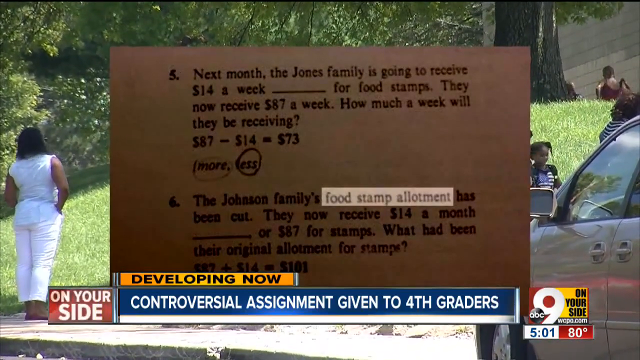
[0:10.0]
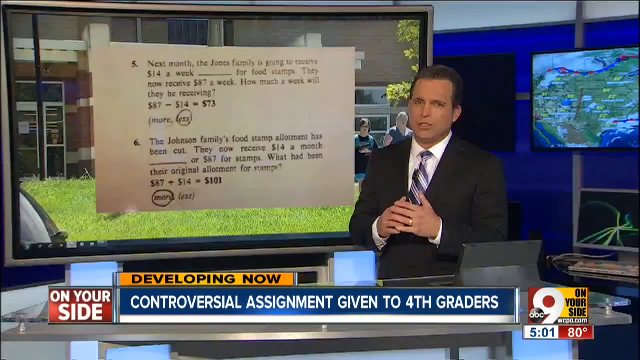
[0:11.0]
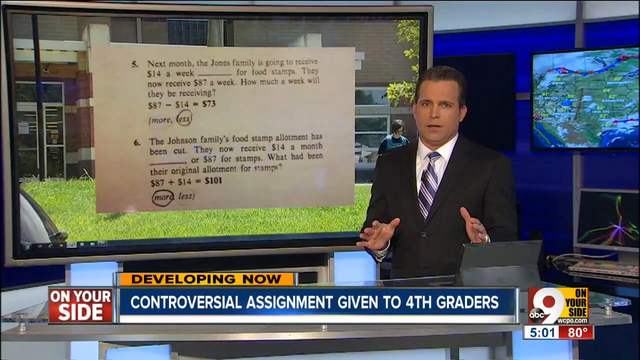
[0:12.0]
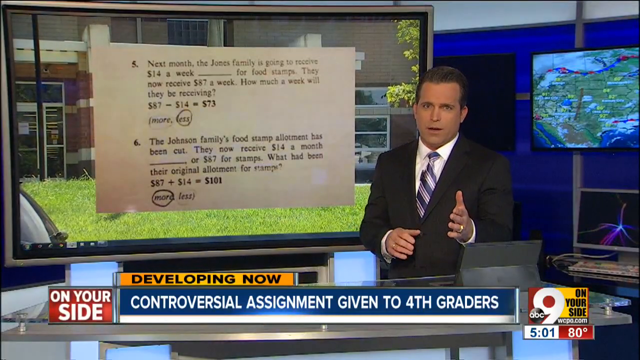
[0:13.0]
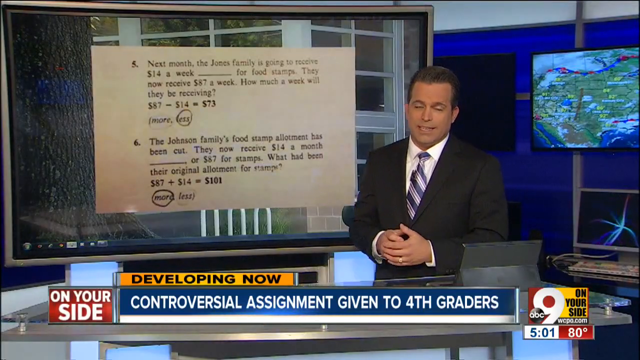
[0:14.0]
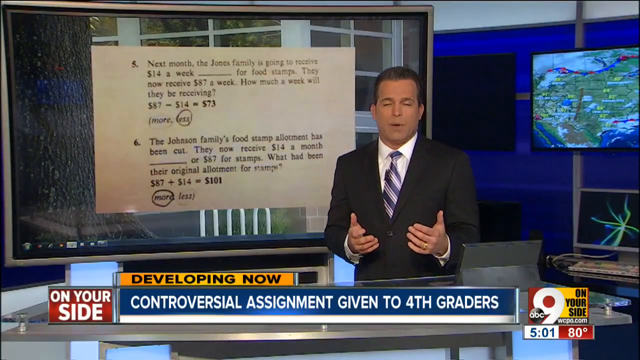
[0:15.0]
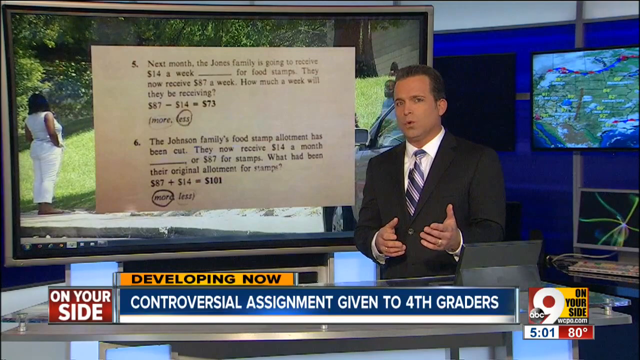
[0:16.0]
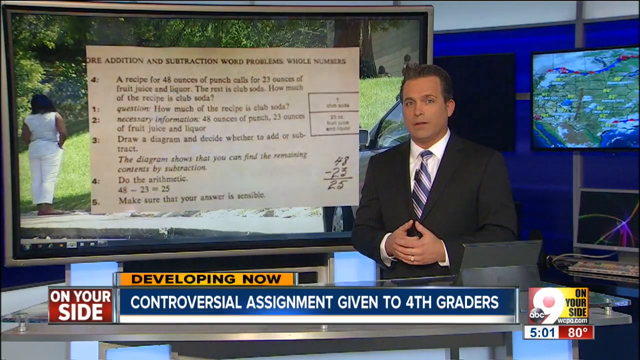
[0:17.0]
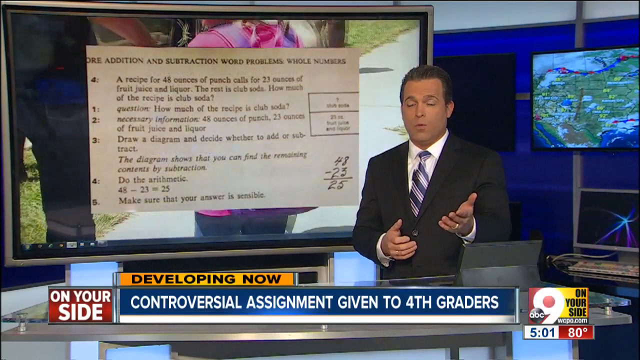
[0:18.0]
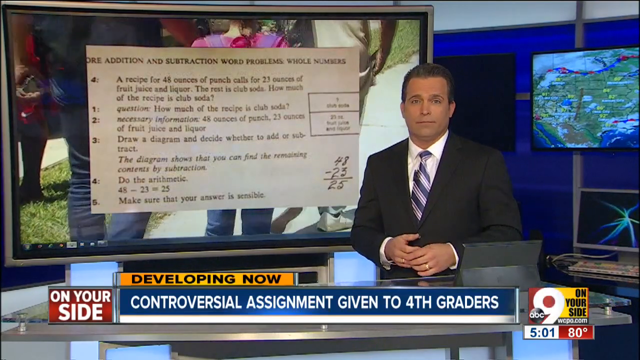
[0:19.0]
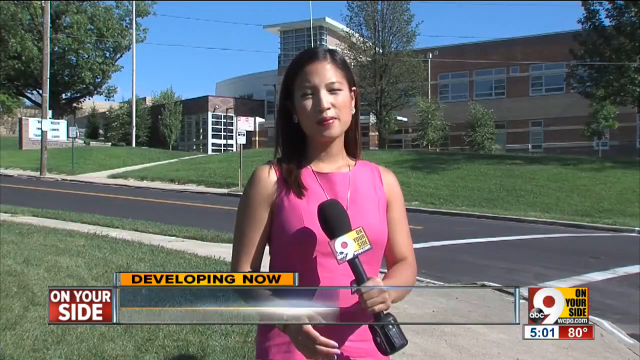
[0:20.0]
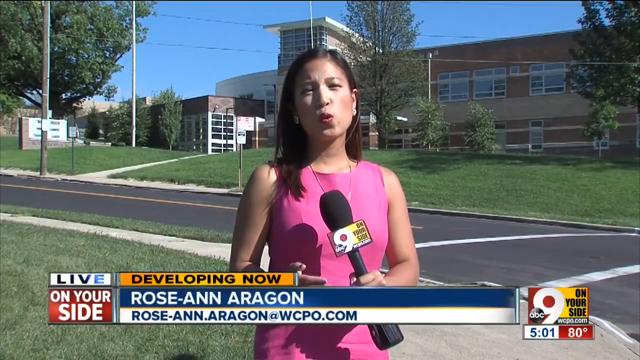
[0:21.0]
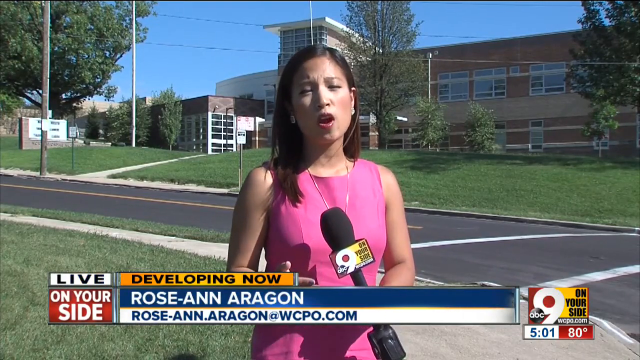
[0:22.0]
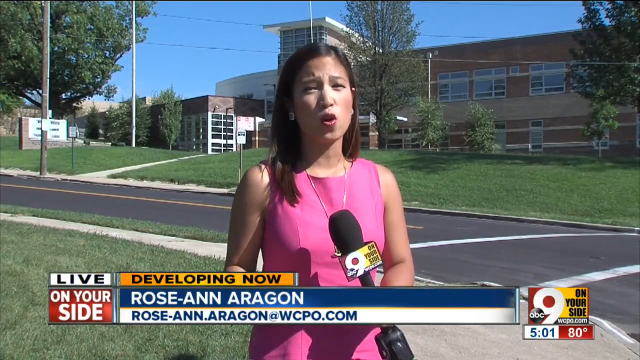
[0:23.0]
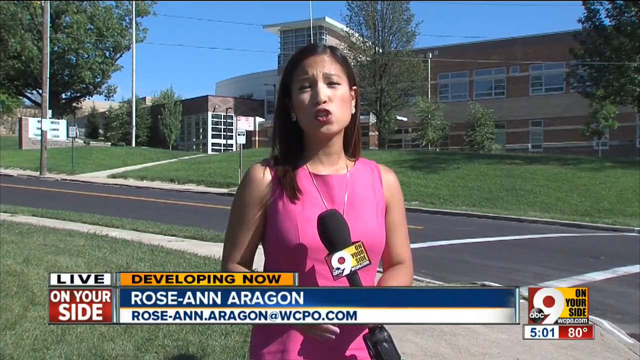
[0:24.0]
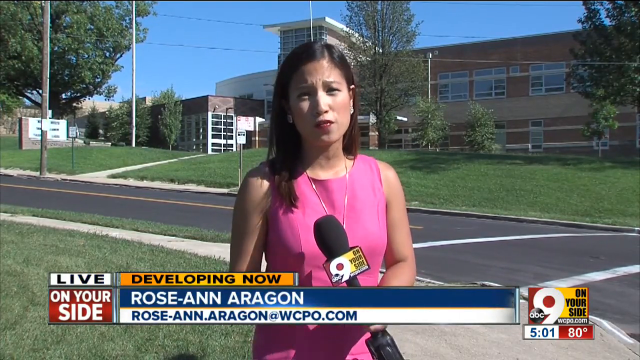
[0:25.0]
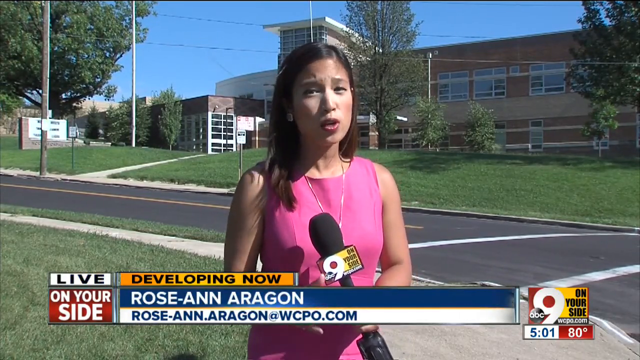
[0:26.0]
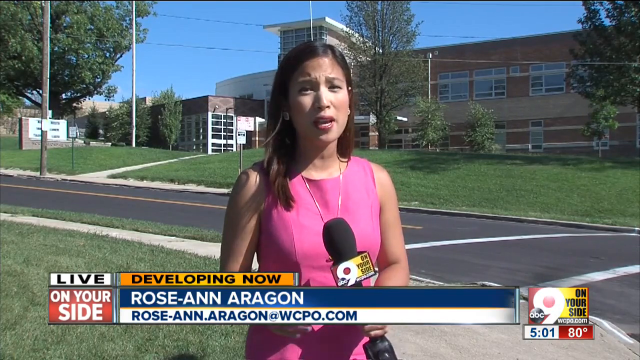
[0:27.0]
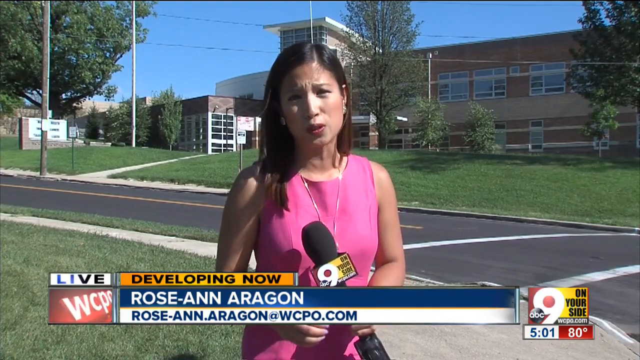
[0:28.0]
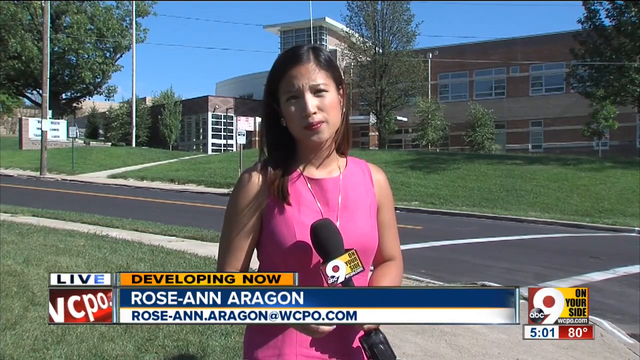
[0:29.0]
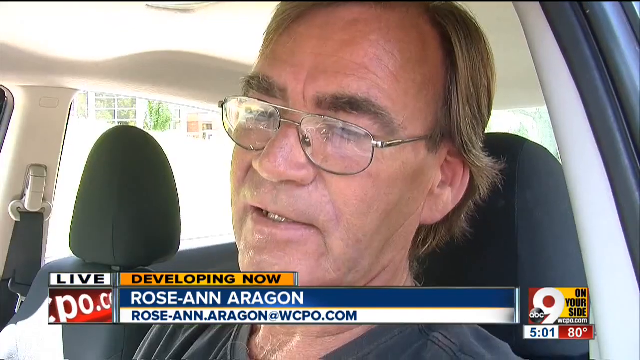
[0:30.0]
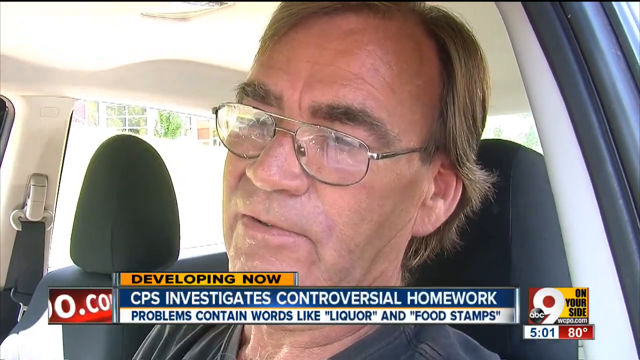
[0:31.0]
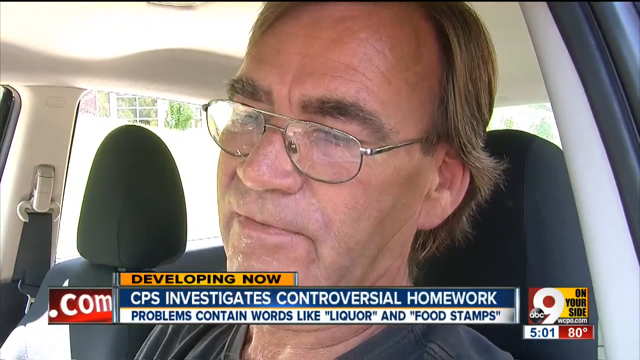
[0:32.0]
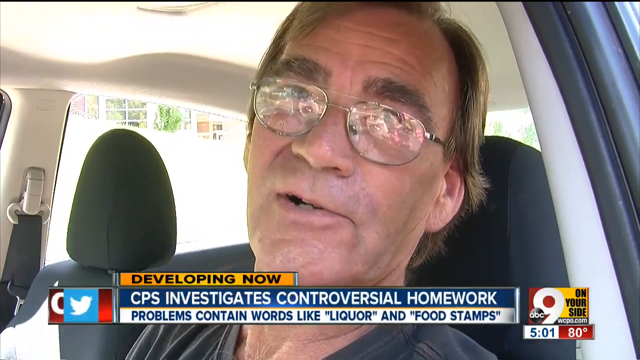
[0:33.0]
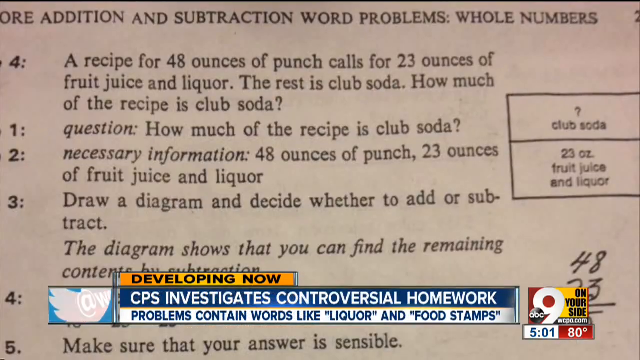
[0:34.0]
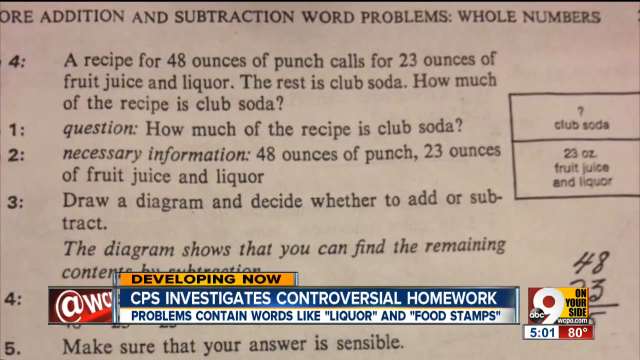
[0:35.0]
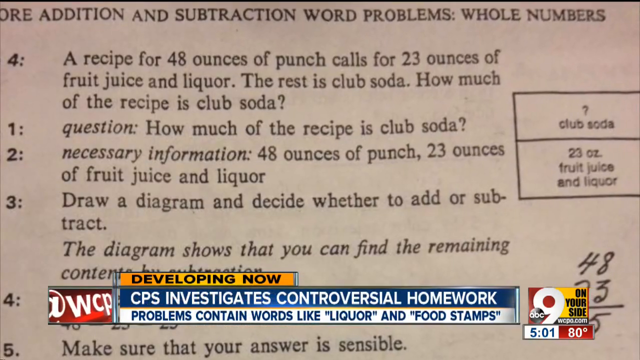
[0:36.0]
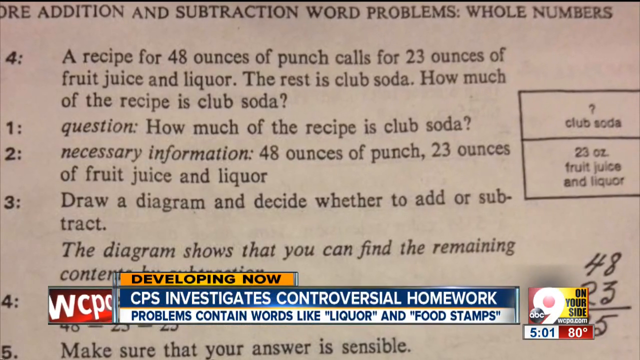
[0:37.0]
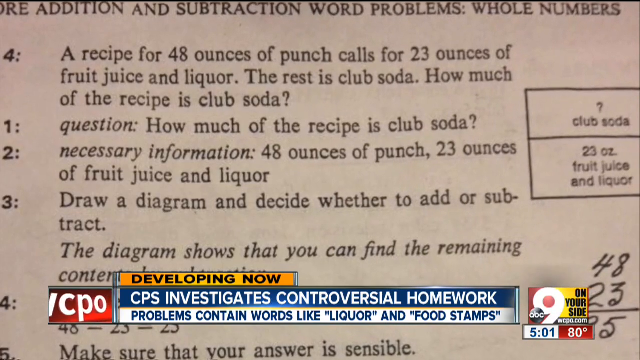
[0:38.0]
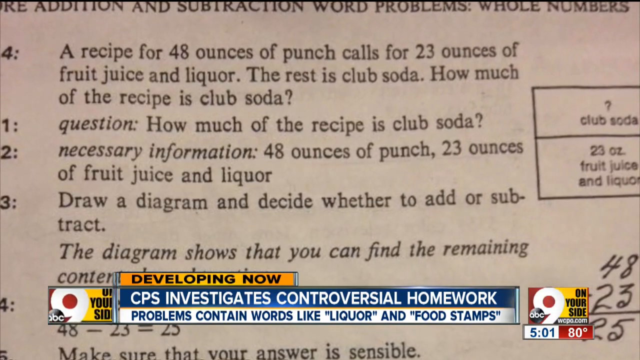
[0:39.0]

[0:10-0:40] The news program shows "on your side" and "developing now controversial assignment given to fourth graders." Text appears in the center of the screen with "food stamp allotment" highlighted. A brief shot shows what appears to be a student with a backpack walking. The scene moves to a newsroom, where an image is behind a man with short dark hair, a dark suit and a striped tie. He motions with his hands, keeping his left hand out and then putting his hands together, and he talks as he keeps putting them together and separating them. An exterior shot shows a woman holding a microphone in her left hand; she has shoulder-length dark hair and wears a pink top, and the wind blows her hair a little as she talks. She motions in a circular motion with her right hand, and what appears to be a school binder is visible. The video cuts to a man in a car with brown hair that sweeps over his ear, glasses and a dark shirt, who shakes his head as he talks. Text then appears on the screen, looking like a word problem, and the view starts to zoom in on it.